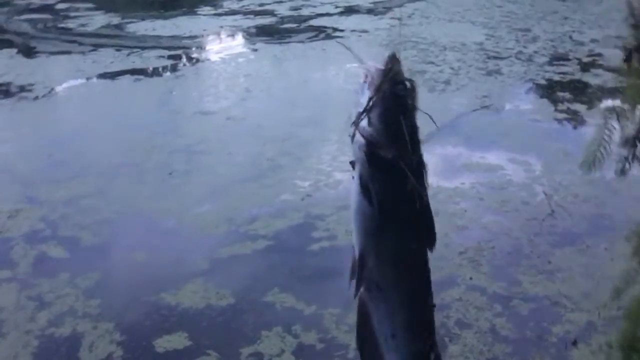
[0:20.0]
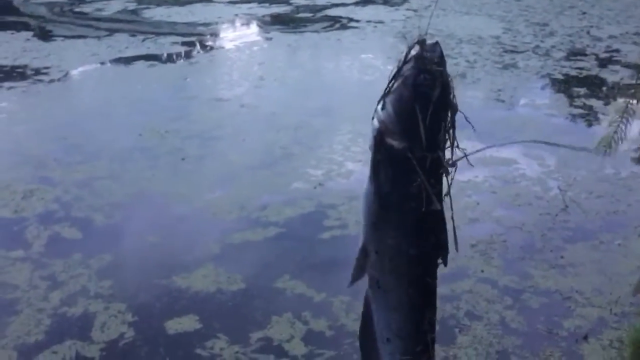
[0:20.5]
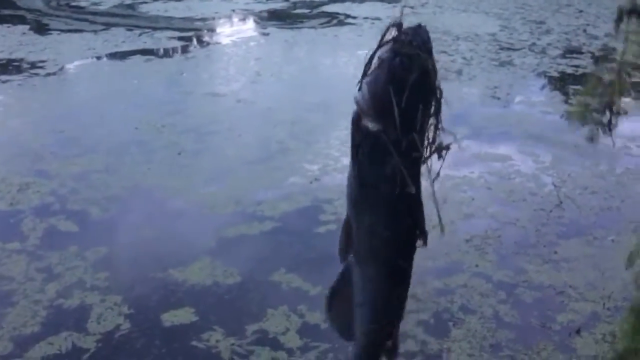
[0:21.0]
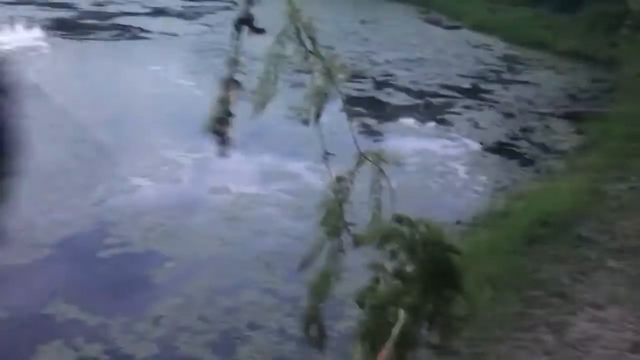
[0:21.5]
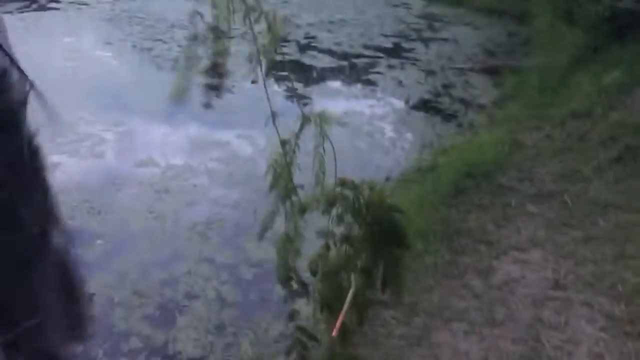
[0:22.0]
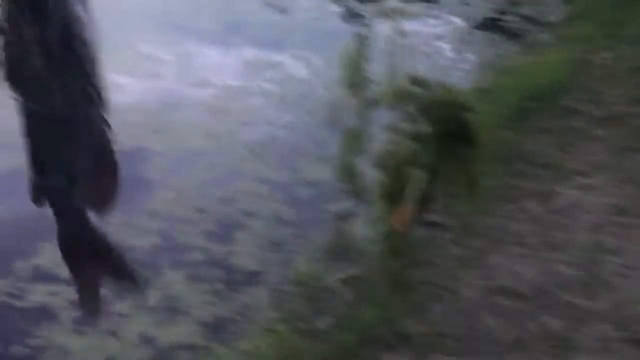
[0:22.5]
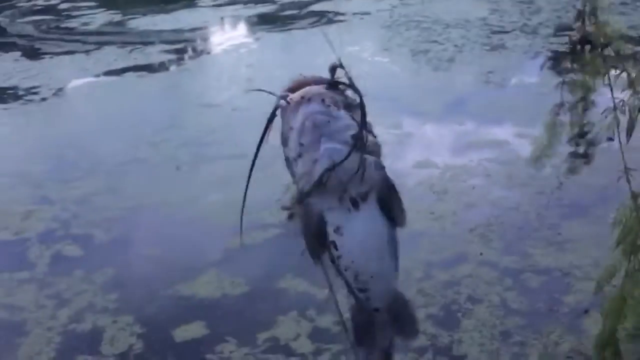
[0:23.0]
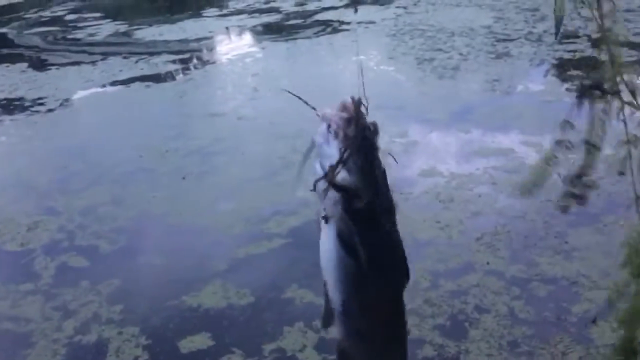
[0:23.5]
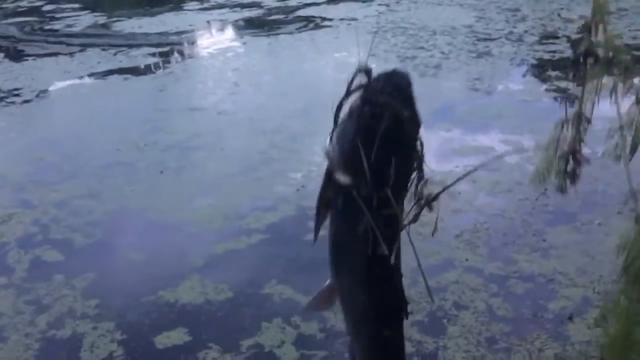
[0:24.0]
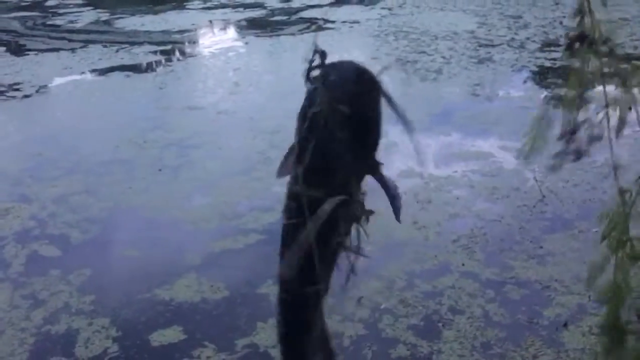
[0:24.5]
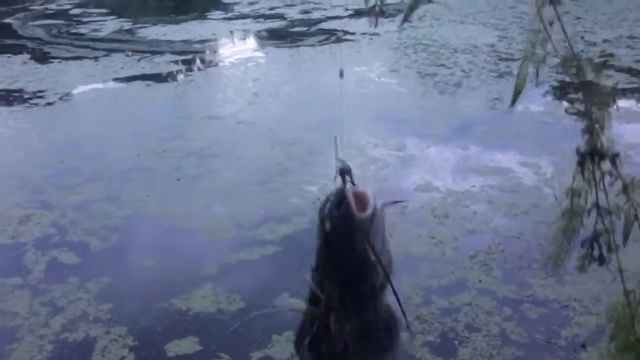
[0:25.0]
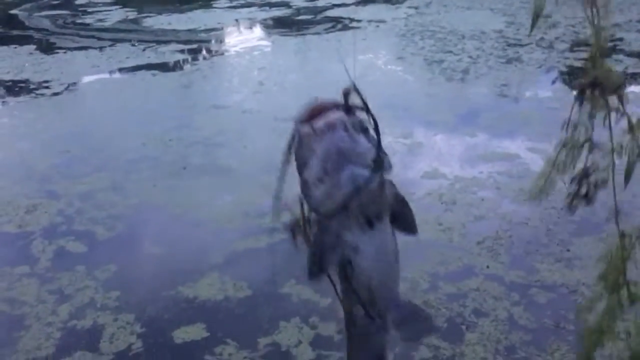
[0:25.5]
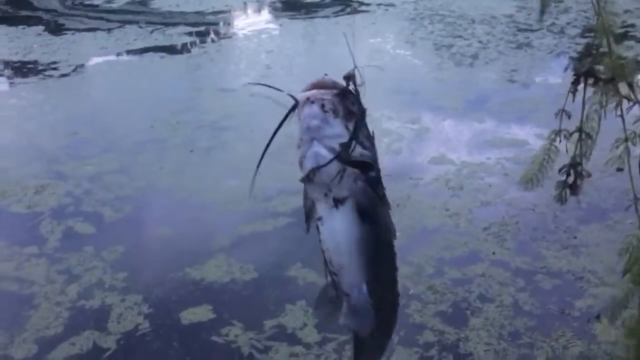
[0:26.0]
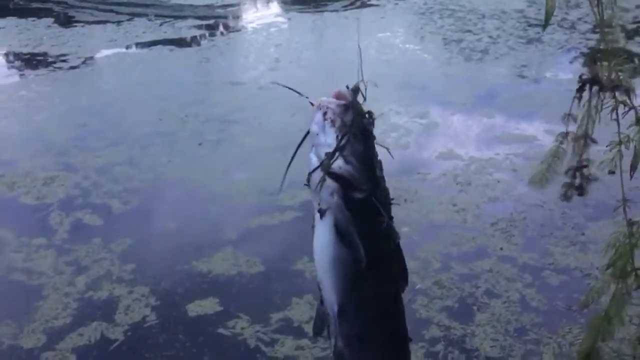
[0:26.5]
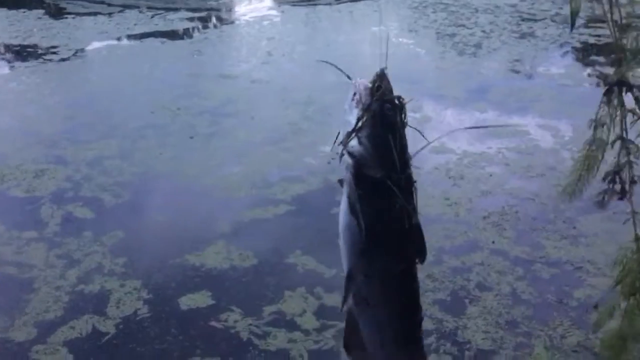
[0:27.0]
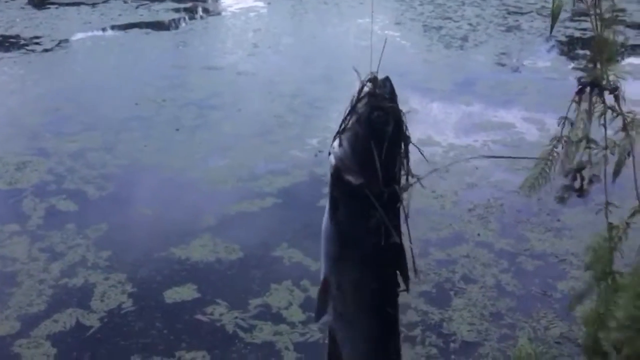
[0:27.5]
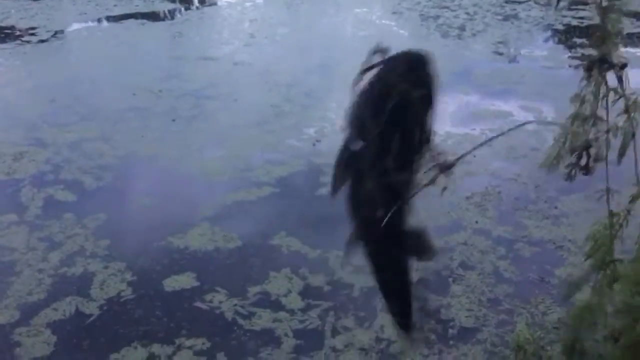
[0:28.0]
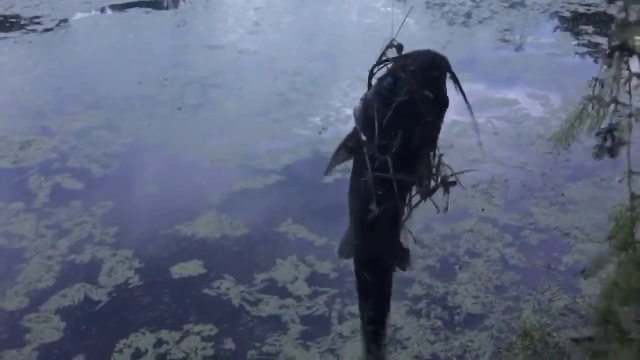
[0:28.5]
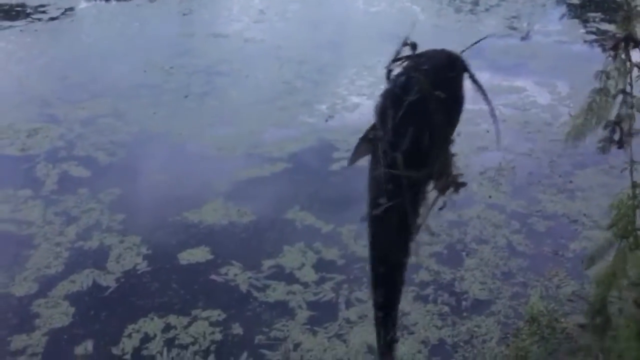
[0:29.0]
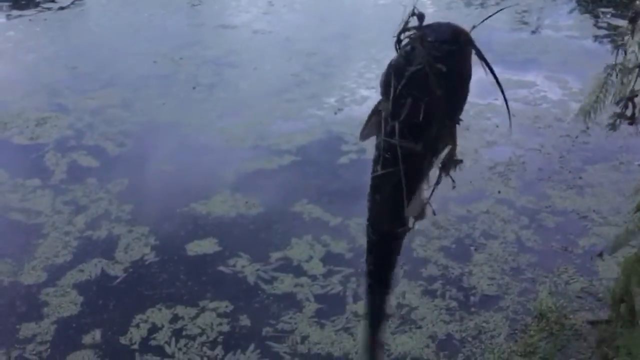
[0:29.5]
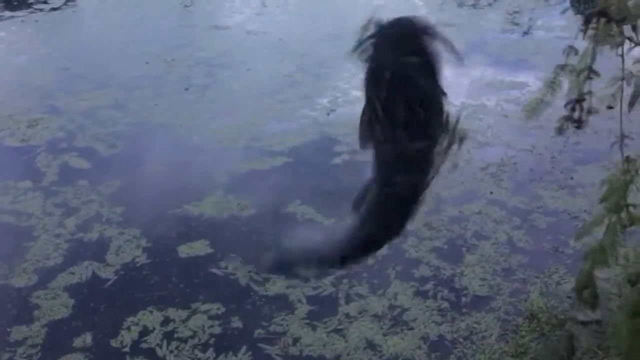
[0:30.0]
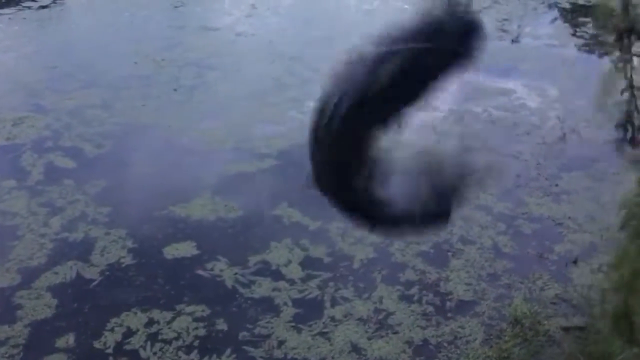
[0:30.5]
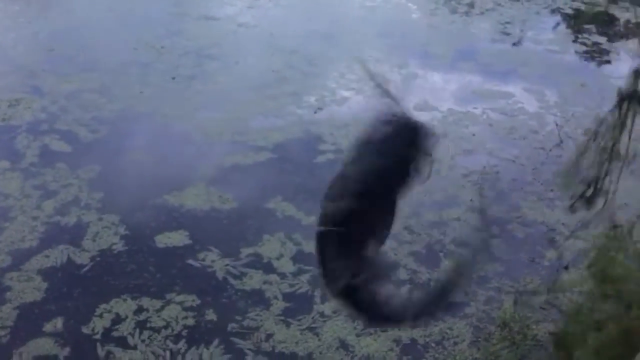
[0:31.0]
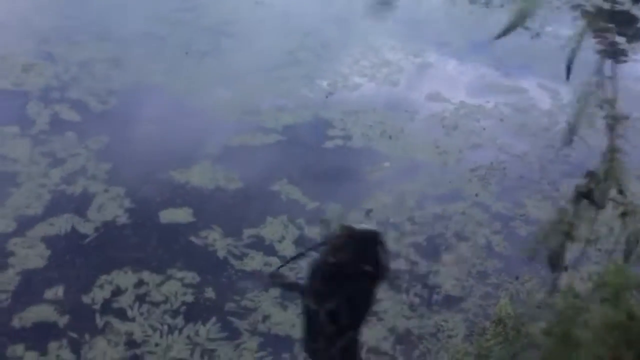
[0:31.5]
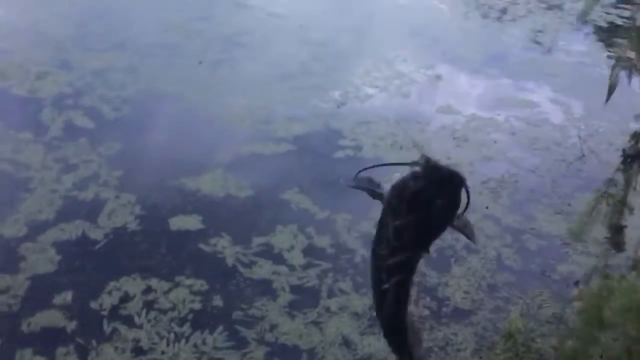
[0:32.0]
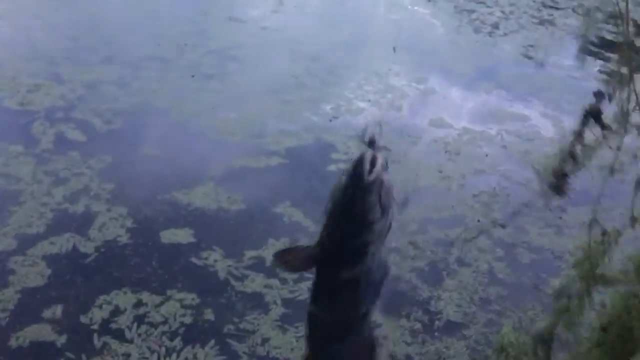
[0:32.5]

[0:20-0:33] A crabfish hangs on a hook, swinging from side to side with its mouth wide open above dirty water, with reeds on the edges of the water. The camera moves away from the crabfish to some grass in the distance, then returns to the crabfish, which swings and wags its tail side to side, fighting for its life to get off the hook. Dirty algae surfaces on the top of the water, which looks greyish or black and is very dirty; hardly anything is clearly visible except the algae on top. The crabfish keeps swinging from side to side, trying to free itself from the hook.